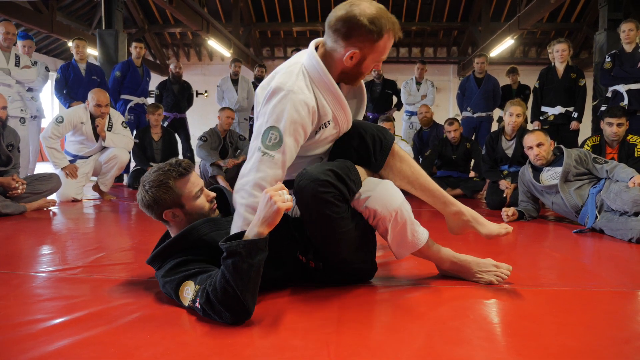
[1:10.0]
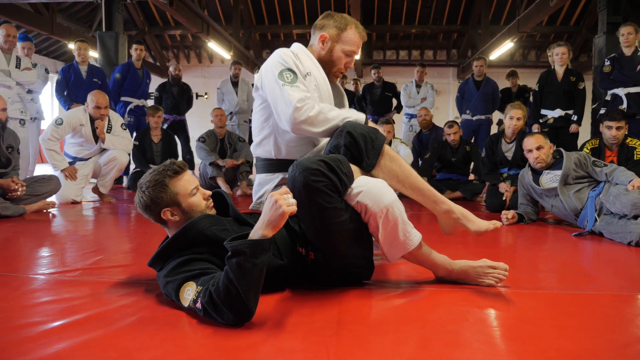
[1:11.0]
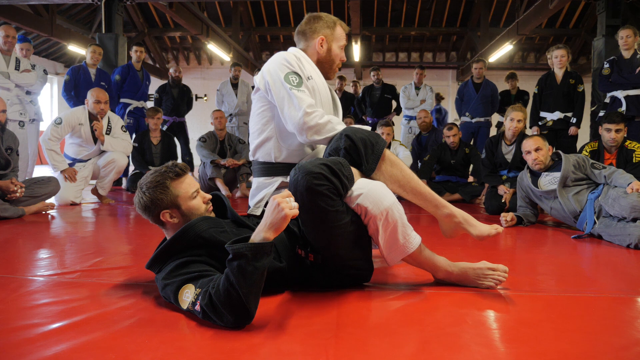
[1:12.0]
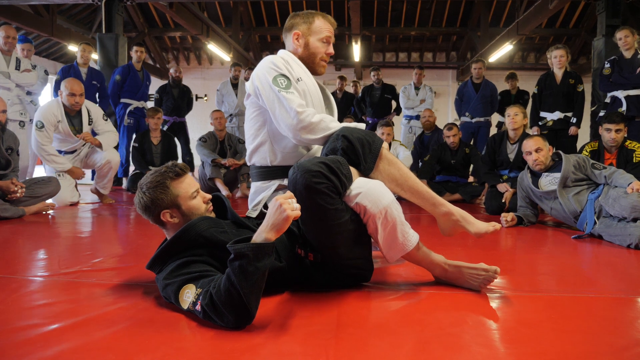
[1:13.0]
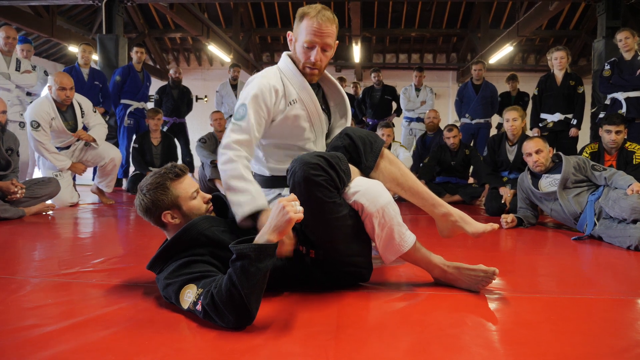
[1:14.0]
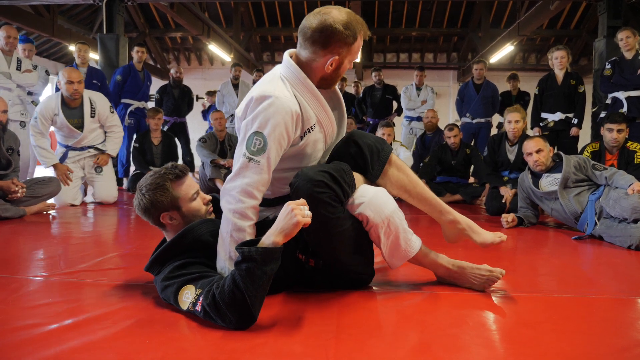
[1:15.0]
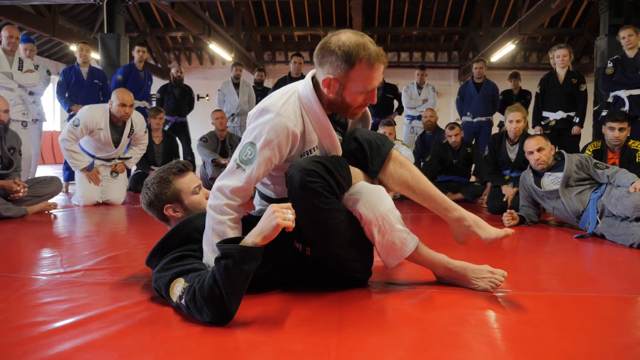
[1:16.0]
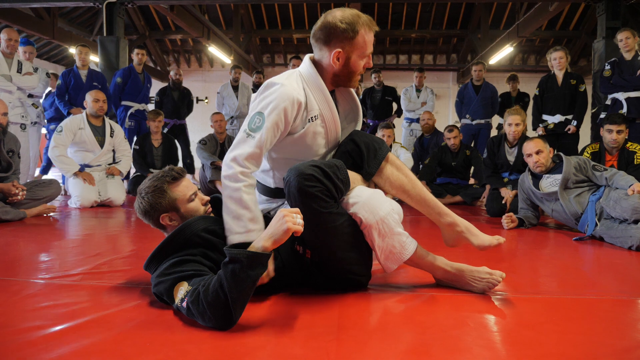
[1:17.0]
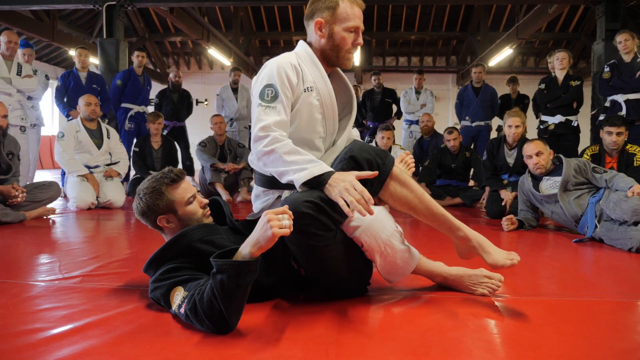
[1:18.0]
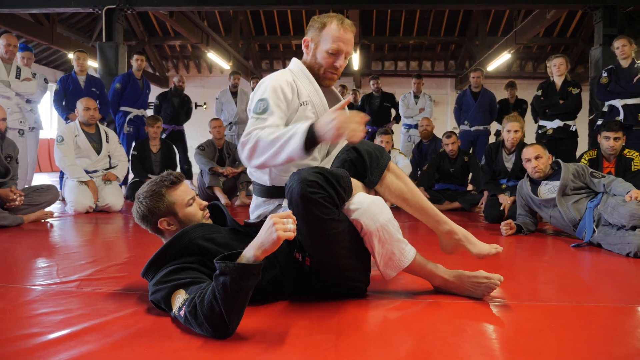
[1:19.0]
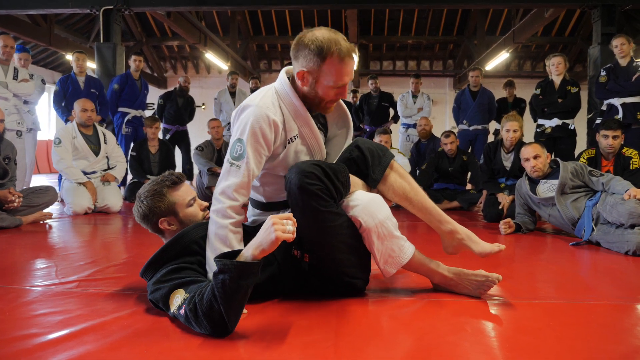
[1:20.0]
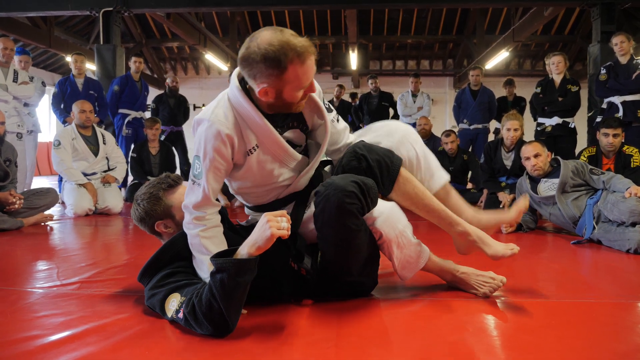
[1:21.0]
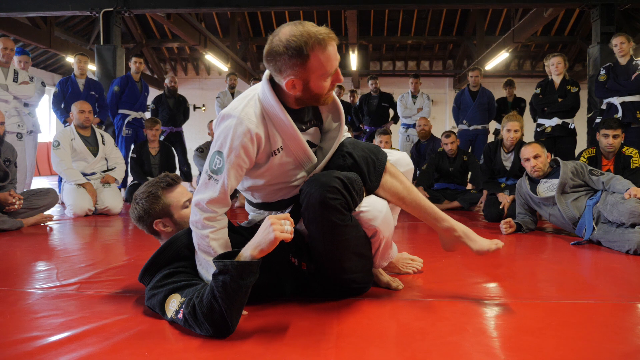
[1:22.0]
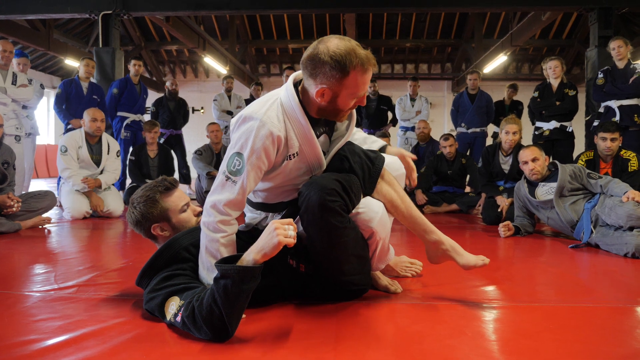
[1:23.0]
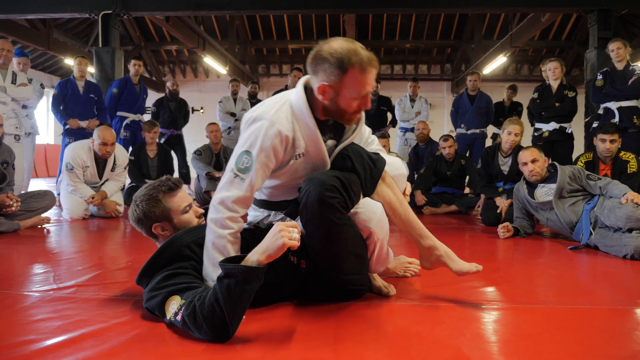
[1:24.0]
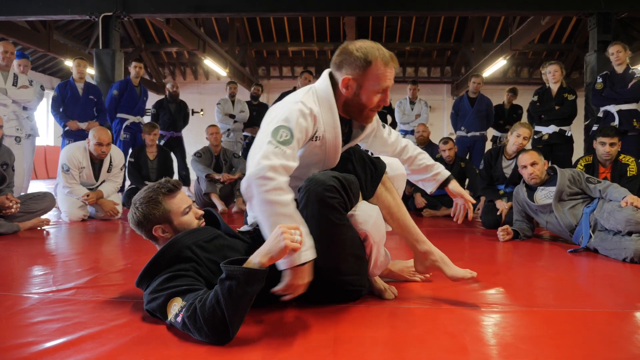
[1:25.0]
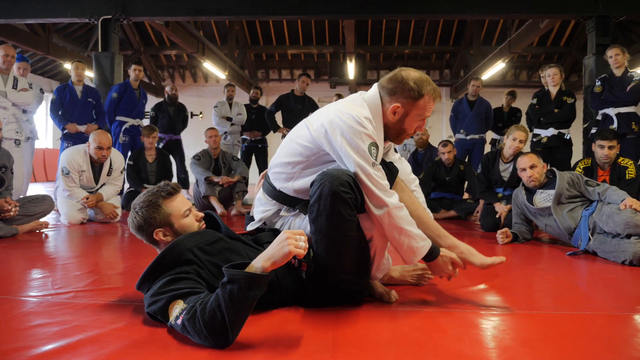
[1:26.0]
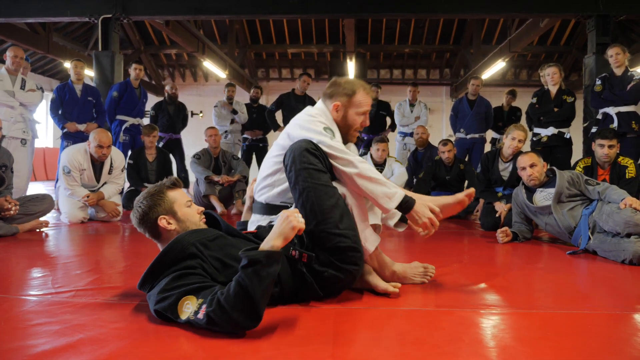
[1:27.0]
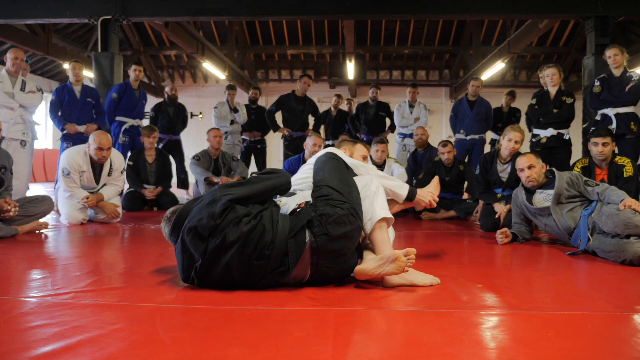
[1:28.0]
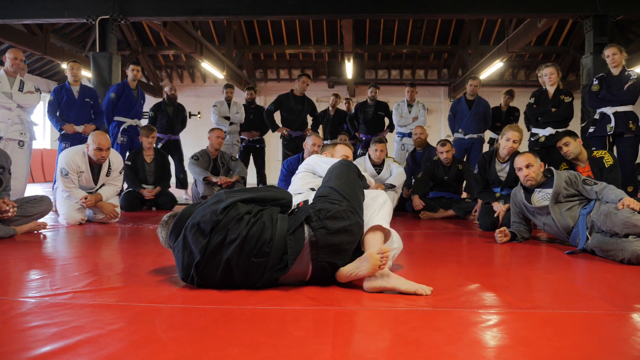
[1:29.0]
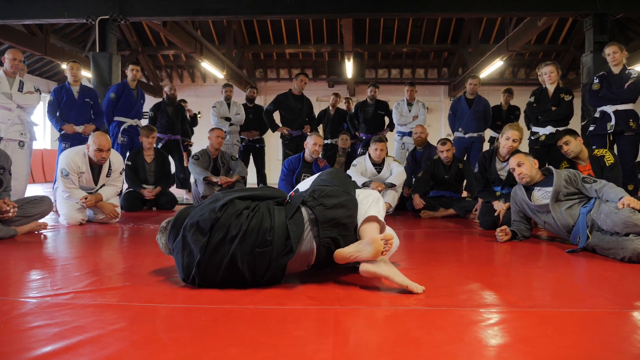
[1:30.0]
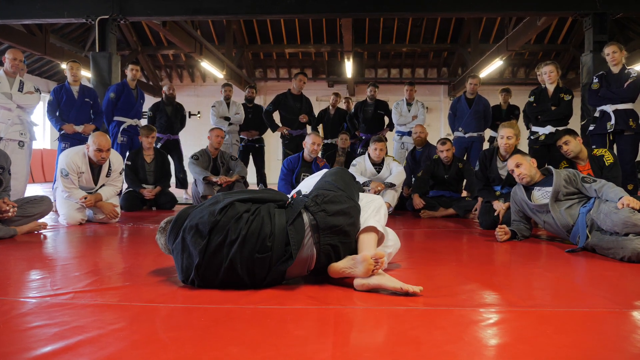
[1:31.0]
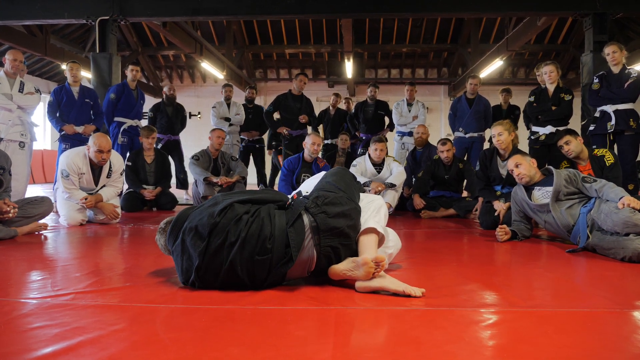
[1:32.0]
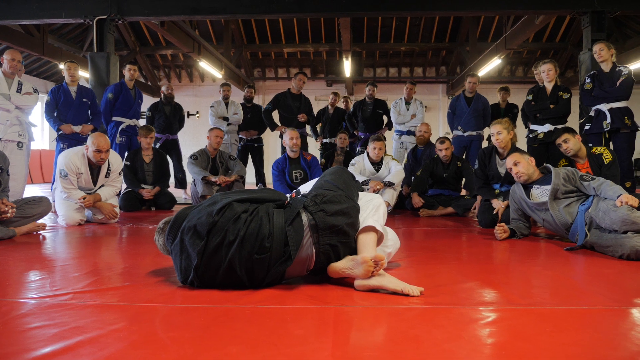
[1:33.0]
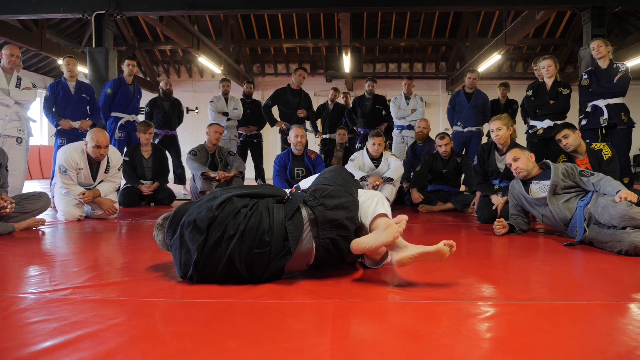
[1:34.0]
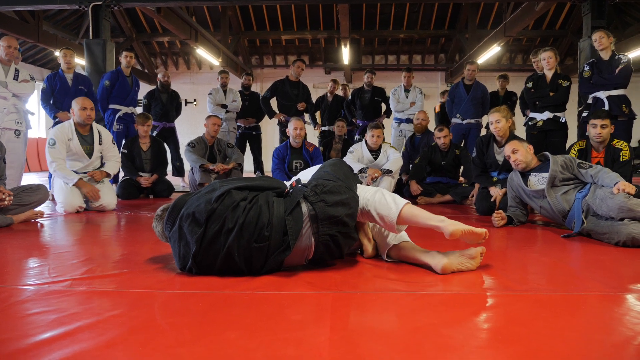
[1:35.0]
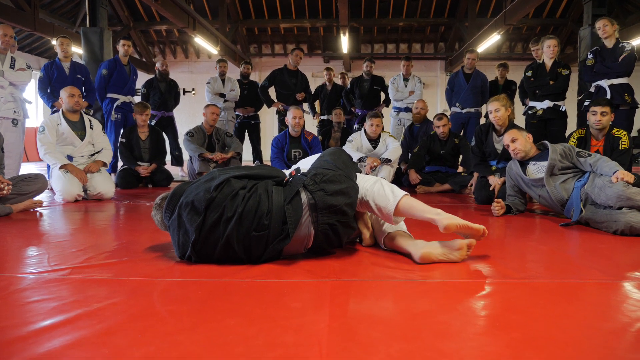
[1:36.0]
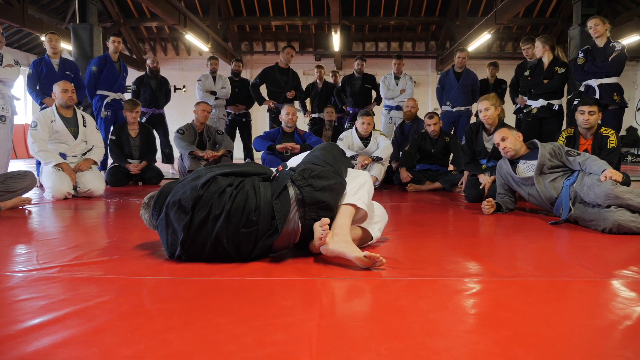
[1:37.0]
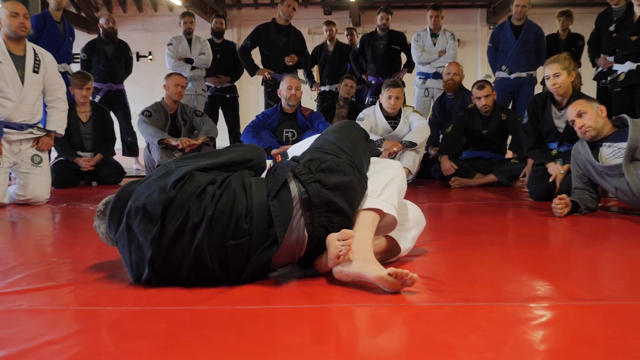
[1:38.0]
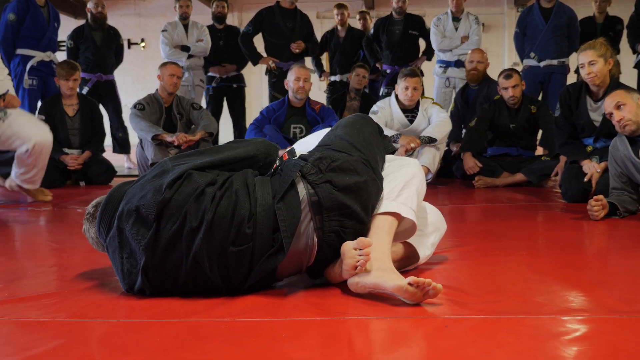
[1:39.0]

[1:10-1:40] The leg lock continues, but the man in black is now flatter on his back and the man in white sits up a little more, his right leg still locked inside the other man's legs. He looks around a bit and explains using his hands, and he kind of rocks the other man a little. He tries to step over with his free leg and seems to use it to lock the other man's leg, though it is hard to tell. He then moves to his side and extends the other man's leg. The angle he is working at is not clearly visible from this very odd angle: the man in black's back and the bottoms of the feet of the man in white are seen. The people around quietly watch, and the man's legs stretch out for a moment.